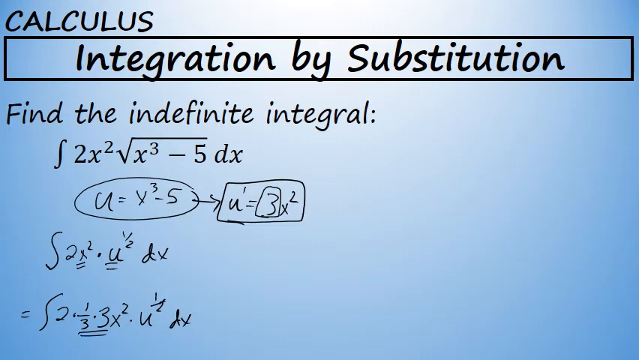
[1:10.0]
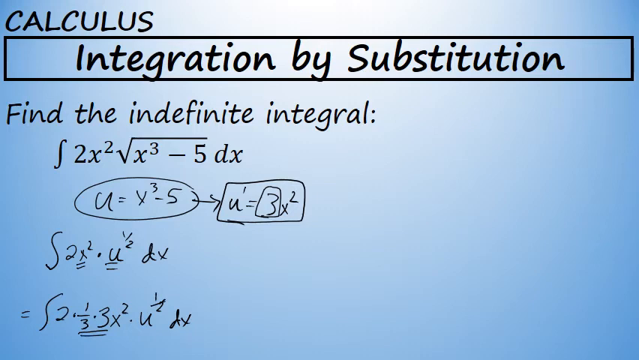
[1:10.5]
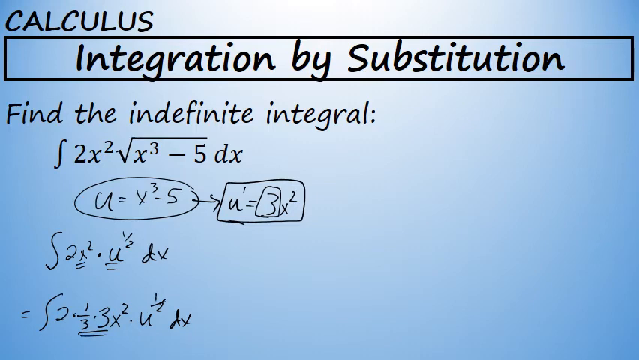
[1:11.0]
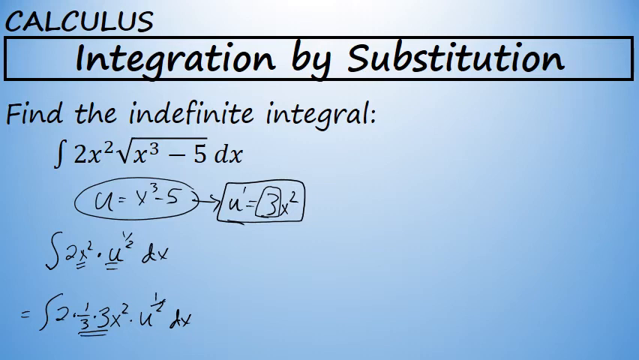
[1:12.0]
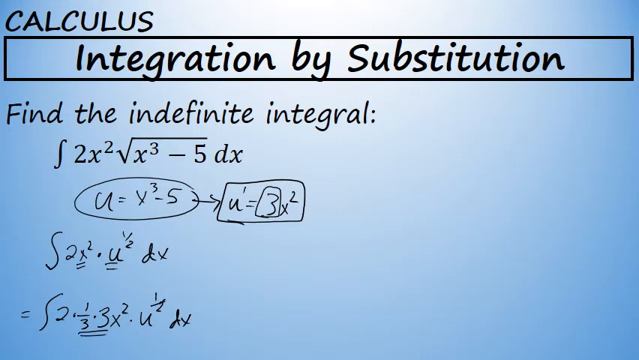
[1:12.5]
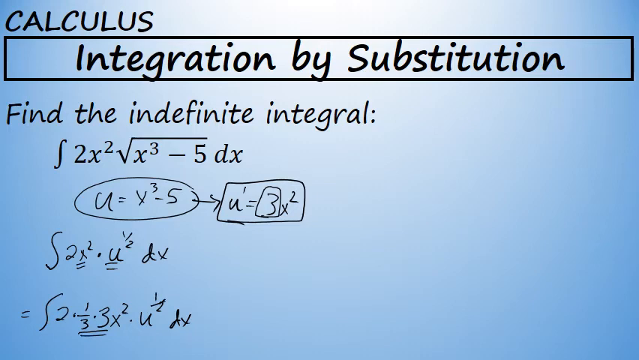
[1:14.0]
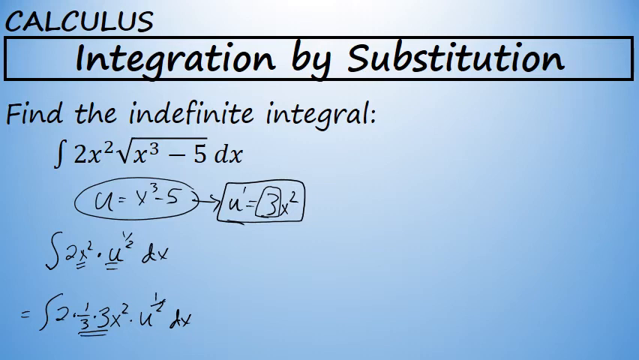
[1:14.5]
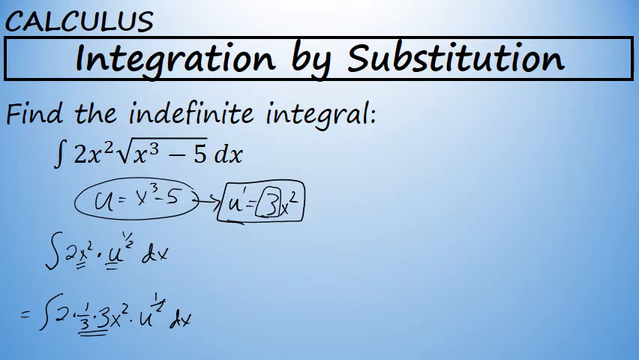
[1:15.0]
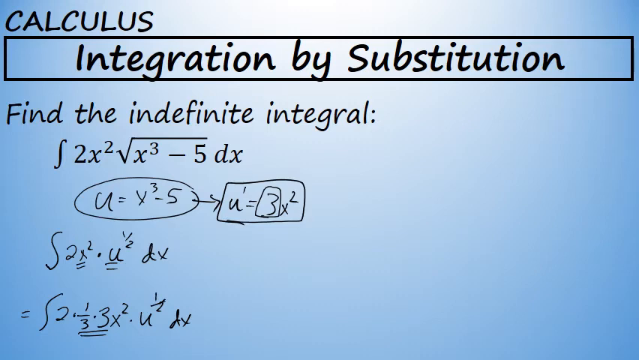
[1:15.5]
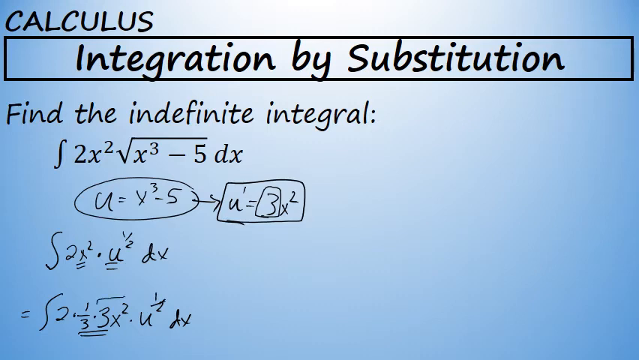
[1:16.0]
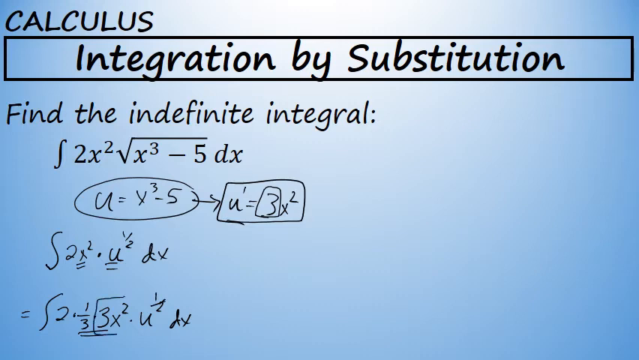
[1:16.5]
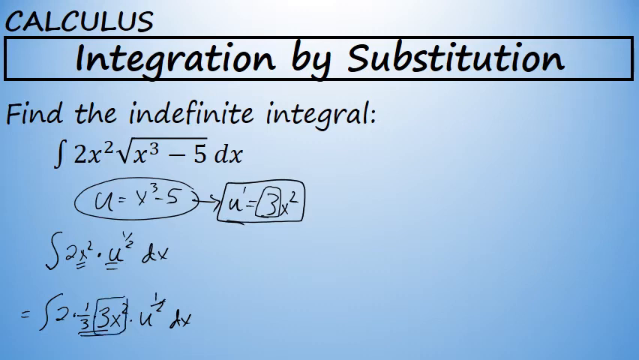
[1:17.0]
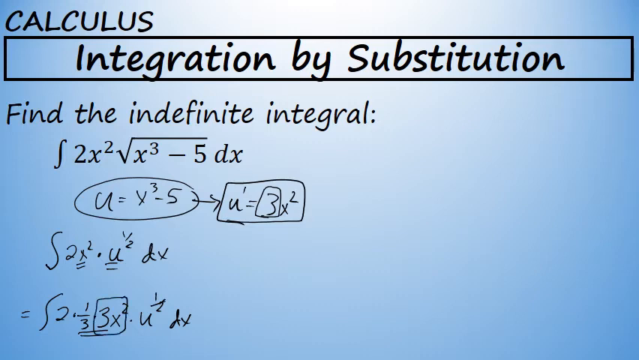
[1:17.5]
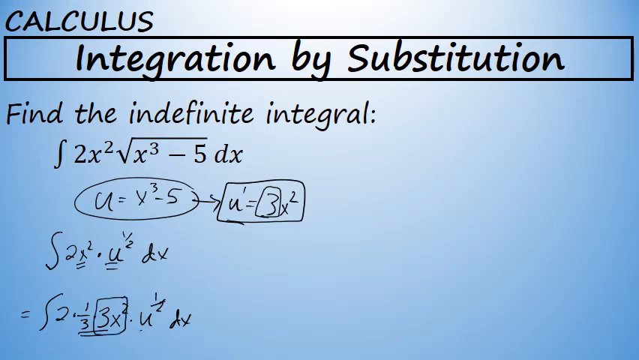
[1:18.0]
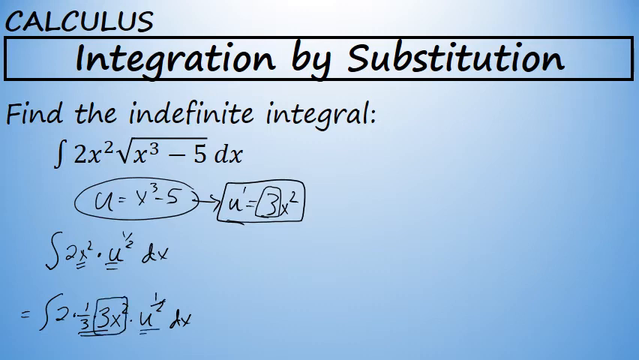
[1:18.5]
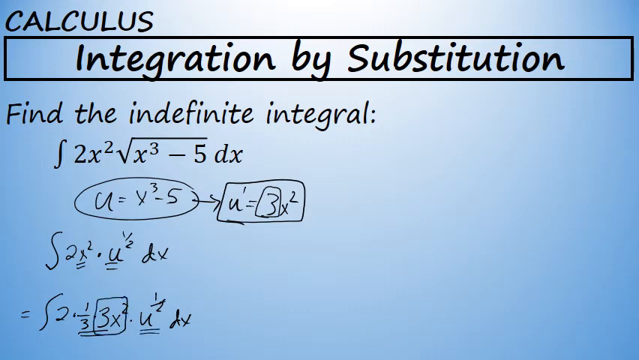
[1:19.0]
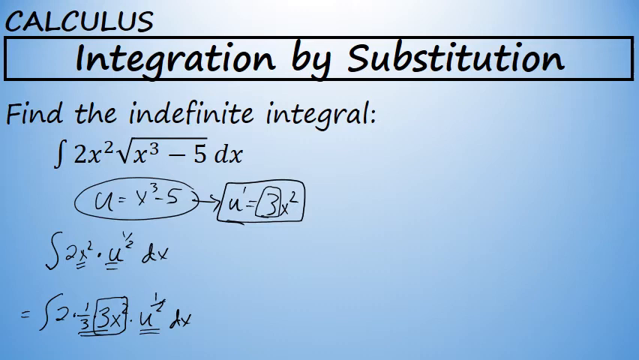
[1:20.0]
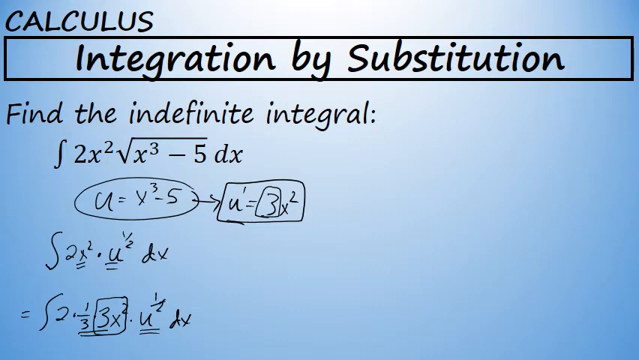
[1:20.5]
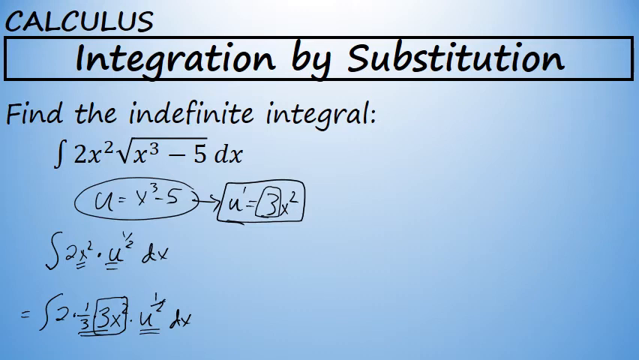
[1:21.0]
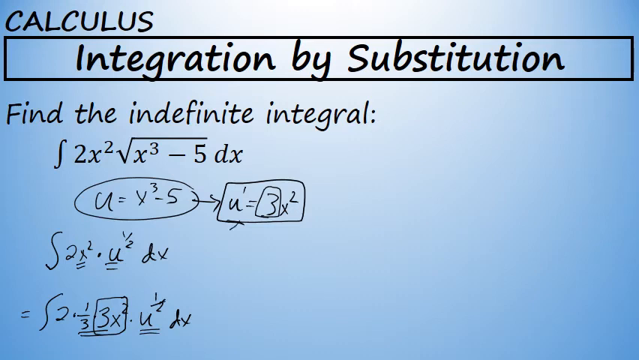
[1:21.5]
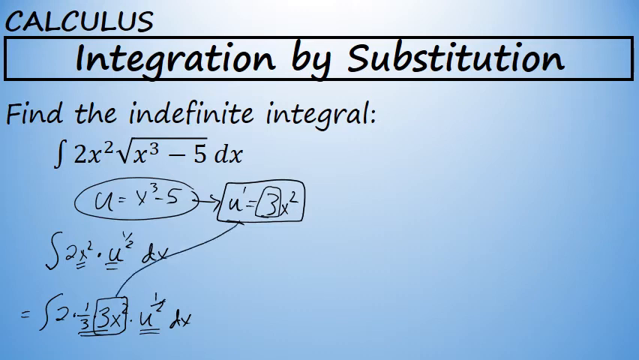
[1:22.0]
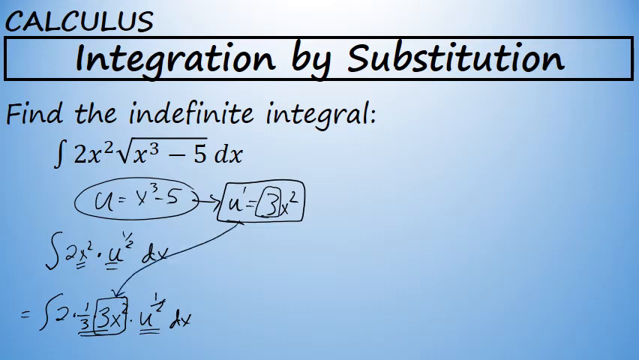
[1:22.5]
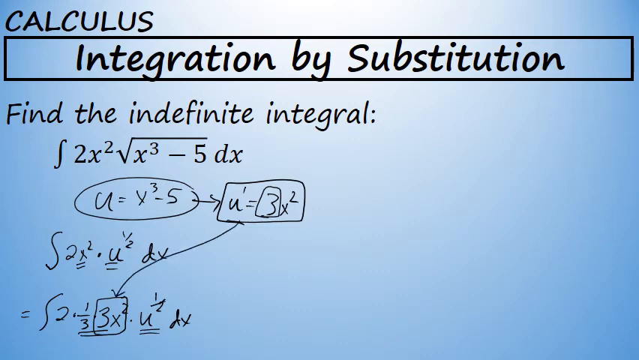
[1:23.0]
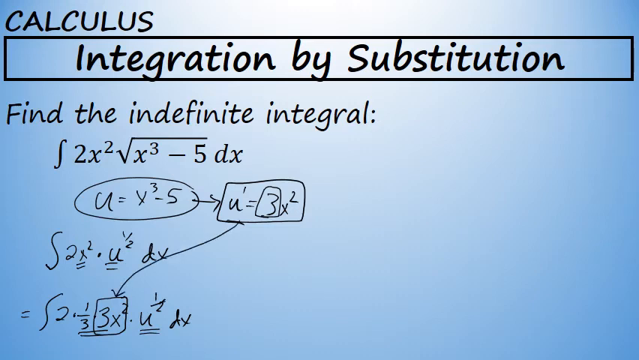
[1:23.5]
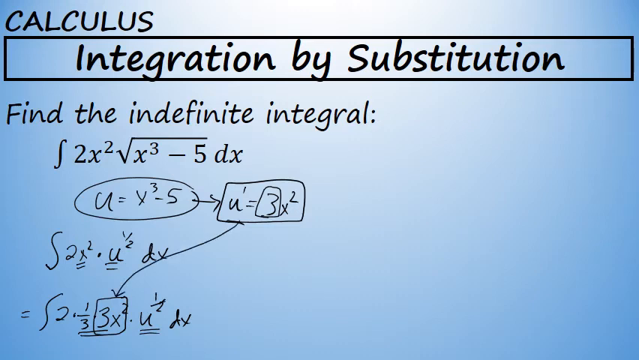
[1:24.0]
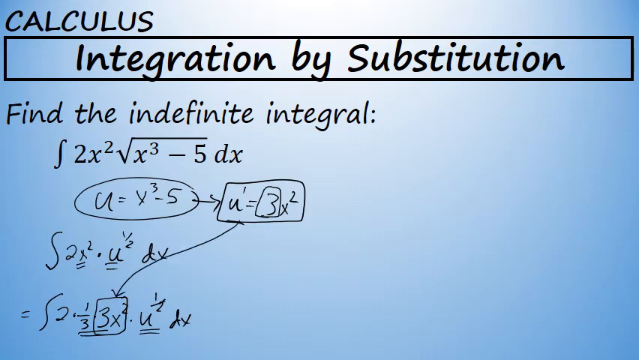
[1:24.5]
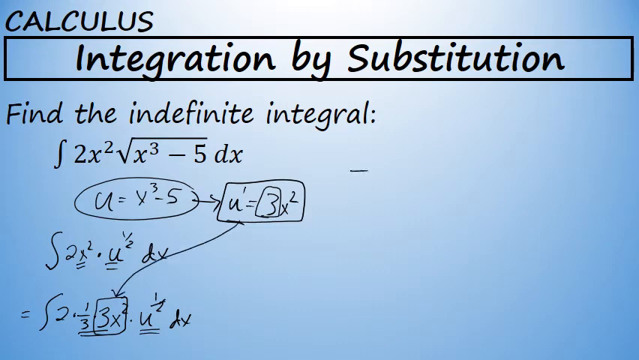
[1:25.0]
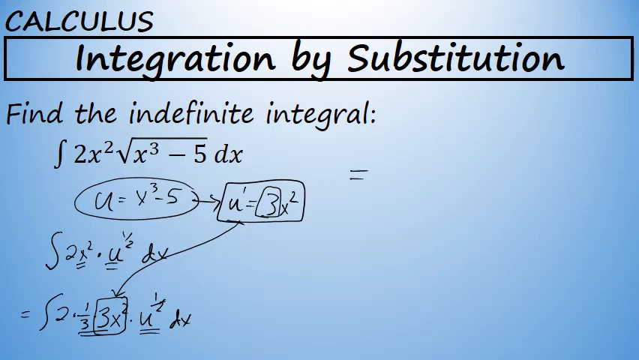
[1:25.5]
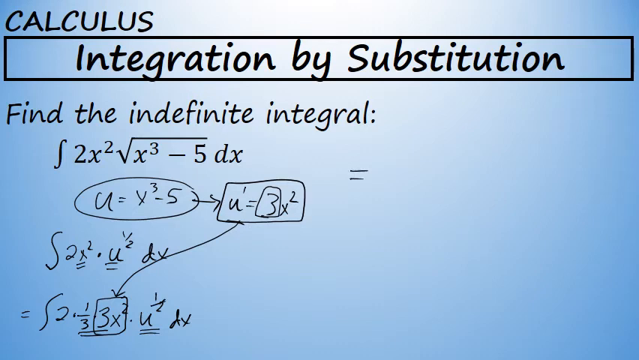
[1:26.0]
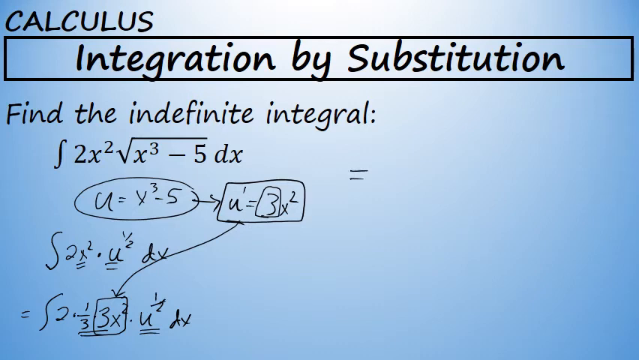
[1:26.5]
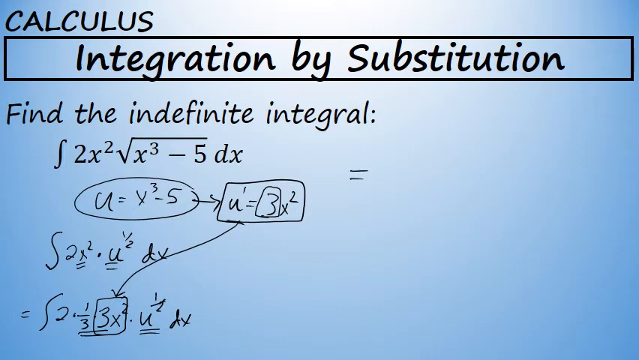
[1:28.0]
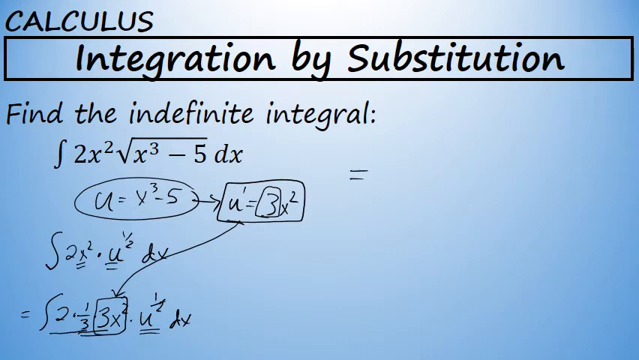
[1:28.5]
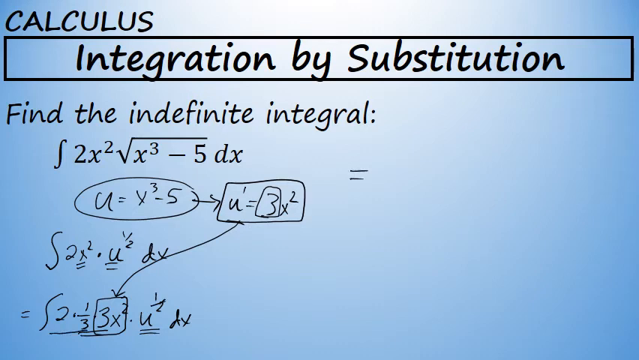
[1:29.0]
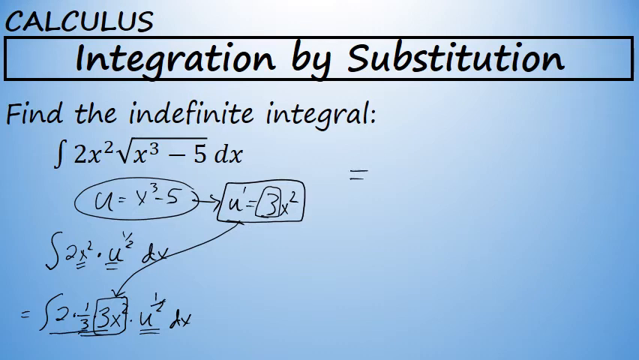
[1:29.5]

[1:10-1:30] The whole screen is blue, darker at the outside edges and lighter toward the middle, where it is almost white. In the top left-hand corner the word "calculus" is written in black, and beneath it a rectangle runs from the left side of the screen to the right side, almost off the screen, containing "integration by substitution" in black. Below it, in black, is "find the indefinite integral", then the integral symbol, 2x superscript 2, the long division sign, x superscript 3, a minus sign, 5 and dx. Underneath, someone has written u equals x superscript 3 minus 5, circled it and drawn an arrow pointing right to u equals 3x superscript 2, which has a box around it and a circle around the number 3. Below that is an integral sign with 2x superscript 2 decimal u dx, with the x and the u underlined. Under that someone has written the integral sign, 2, 1/3, decimal, 3x superscript 2, u, half, dx. They draw a box around the 3x superscript 2, then go up to the equation above and draw an arrow from that 3 down to the 3 on the bottom.